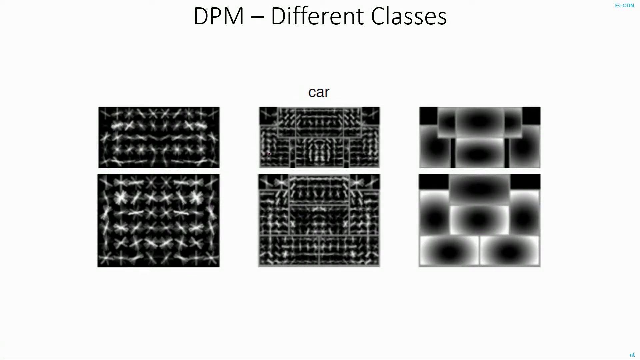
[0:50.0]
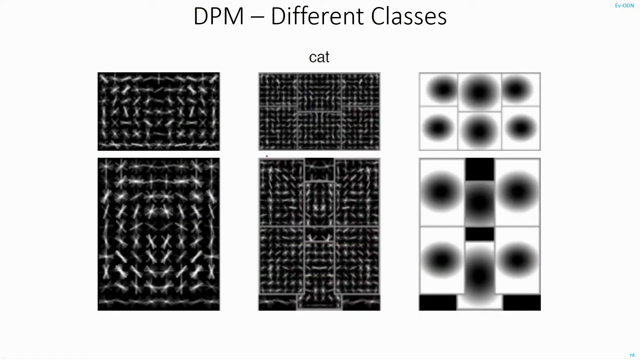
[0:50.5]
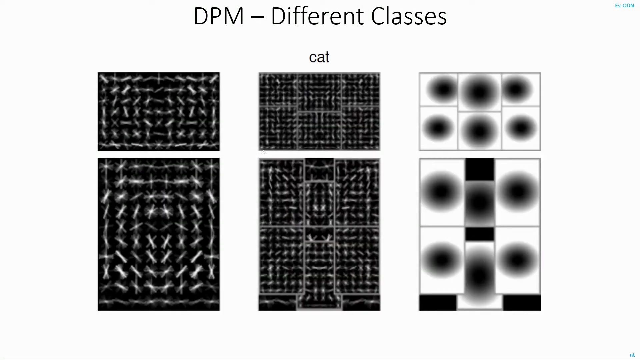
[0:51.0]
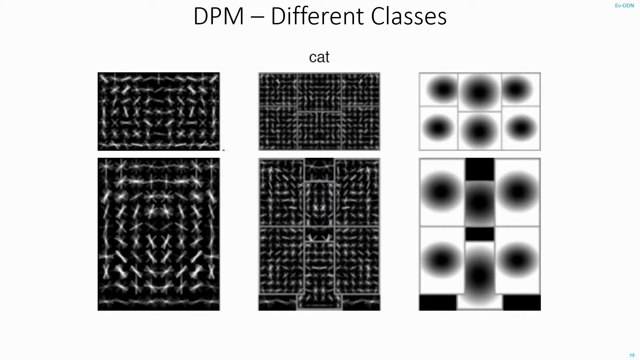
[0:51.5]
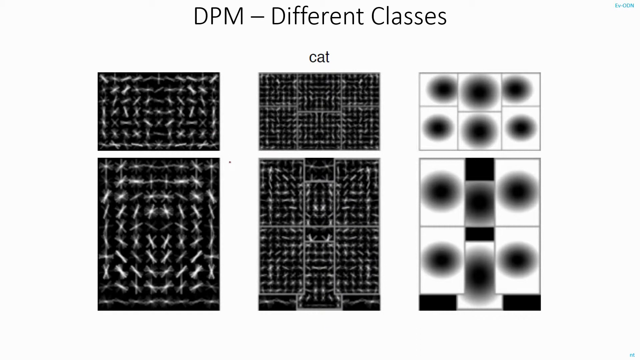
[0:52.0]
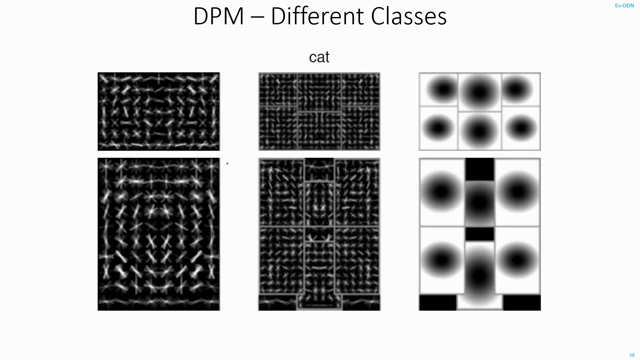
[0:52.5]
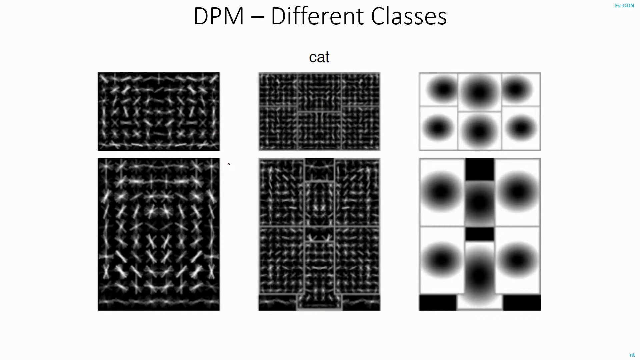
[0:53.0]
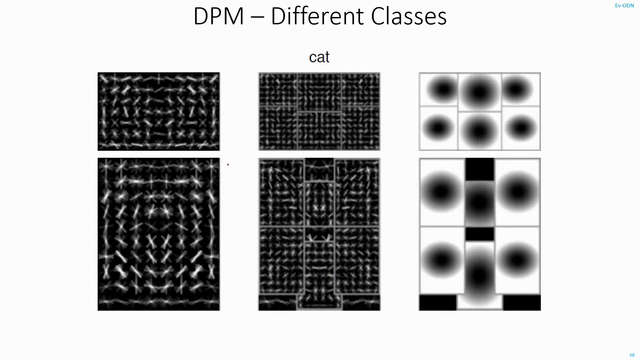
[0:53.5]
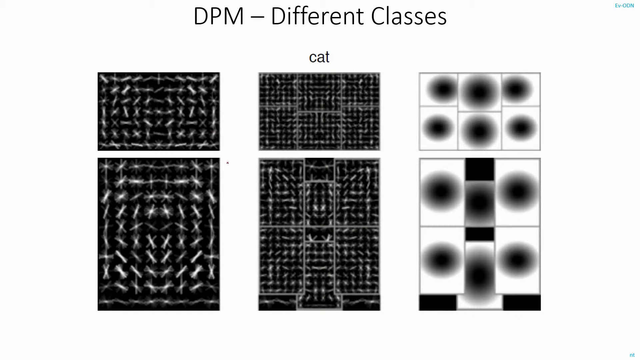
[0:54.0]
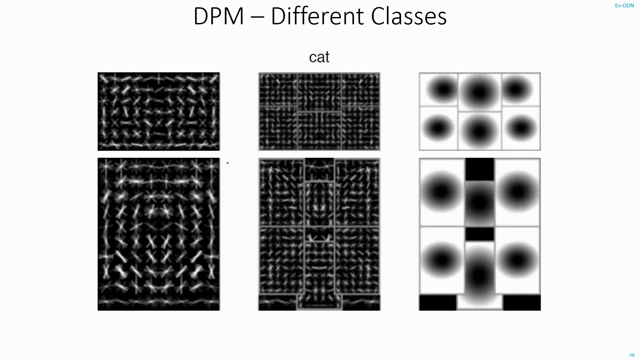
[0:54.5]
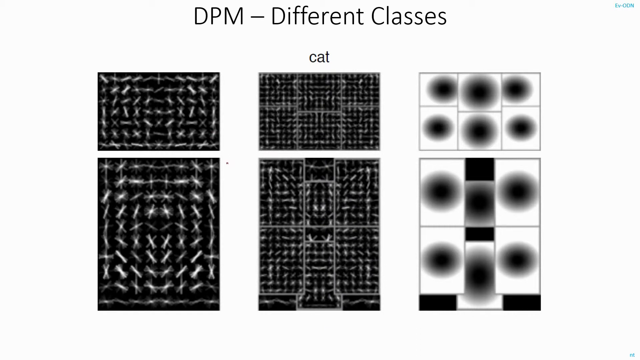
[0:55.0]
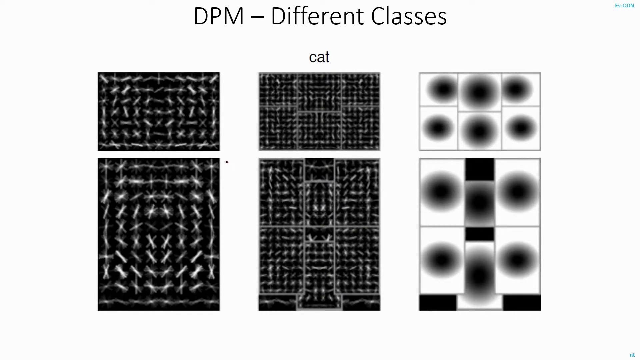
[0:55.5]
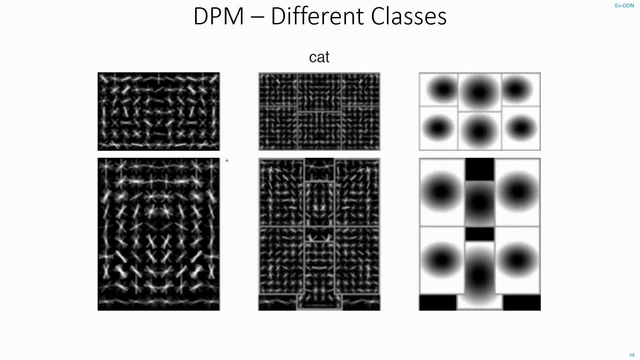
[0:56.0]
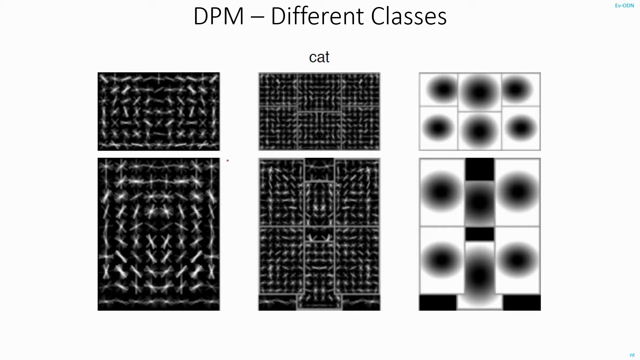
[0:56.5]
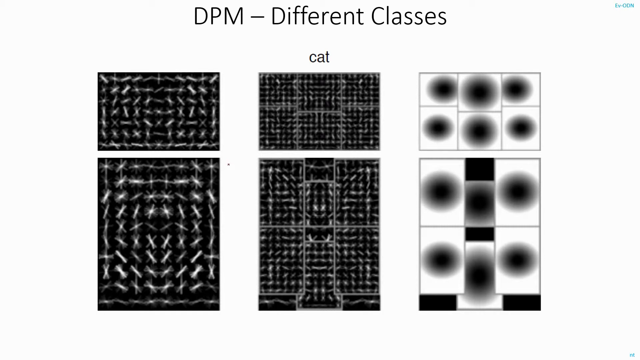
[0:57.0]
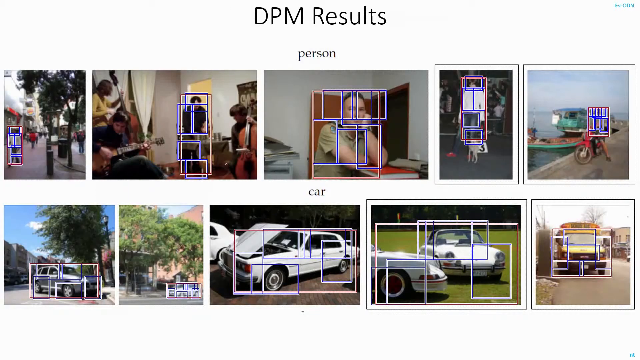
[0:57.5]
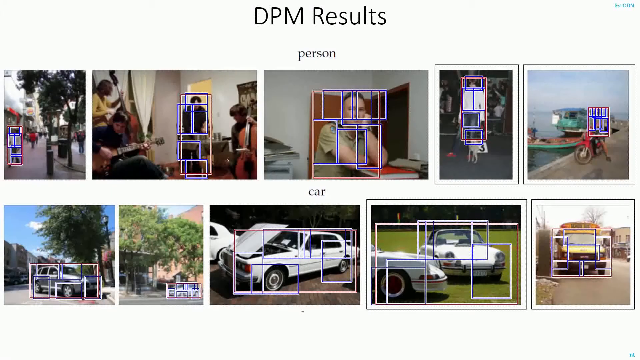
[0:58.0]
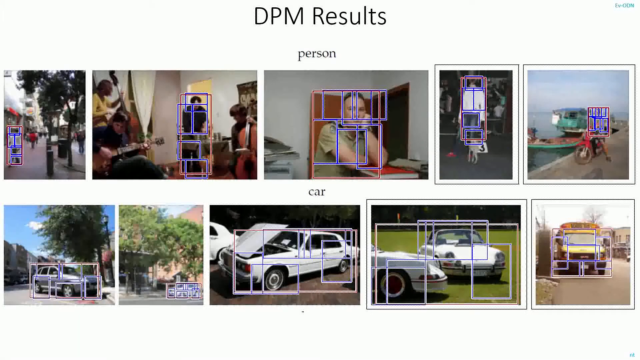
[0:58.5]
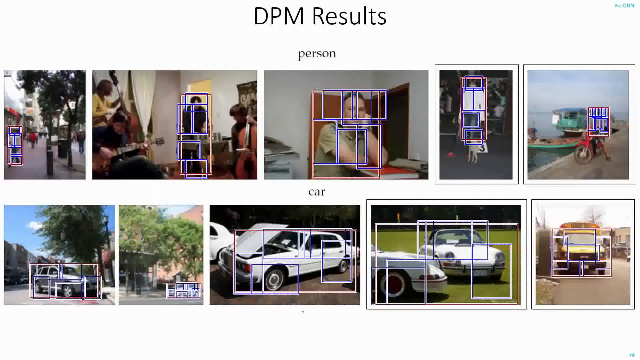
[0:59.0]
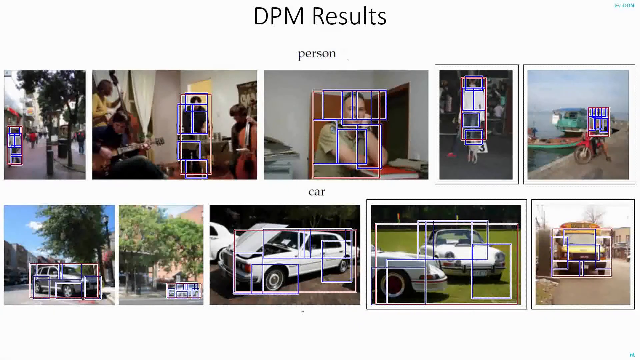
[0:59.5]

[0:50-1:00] Words at the top read "DPM, different classes". There are three rectangles, and below each one are three tall rectangles. Each rectangle contains a pattern, and the same pattern appears in the bigger rectangle under it: the first looks like a lot of lines, the second looks like smaller lines, and the third looks like fuzzy circles. The word "cat" is above the middle one. The slide then switches to one headed "DPM results", showing five pictures in a row with the single word "person" in lowercase letters above them. In each picture at least one main person is covered with many outlines of squares and rectangles. Next comes the word "car", followed by five images of cars in a row from left to right, each car with outlines of squares and rectangles all over it.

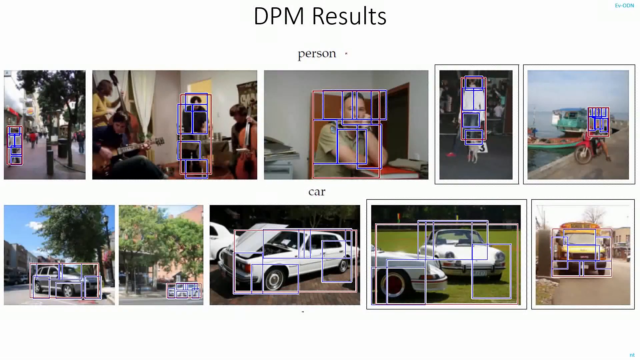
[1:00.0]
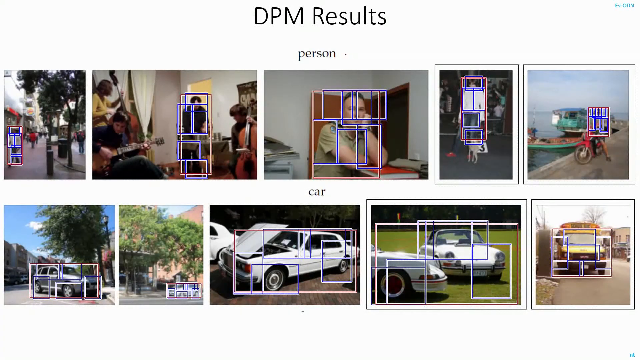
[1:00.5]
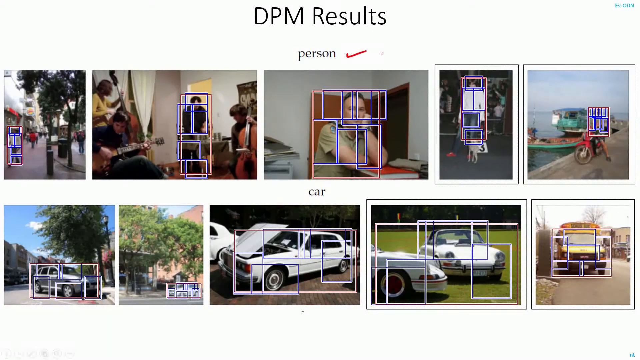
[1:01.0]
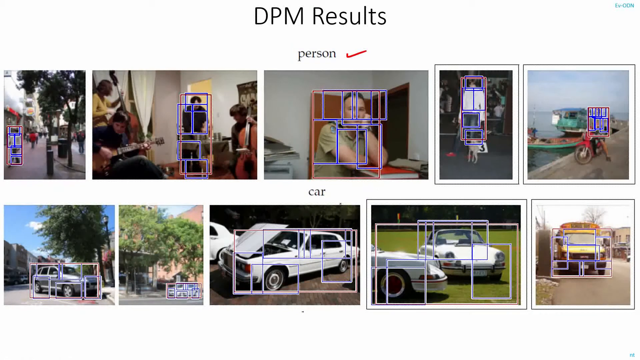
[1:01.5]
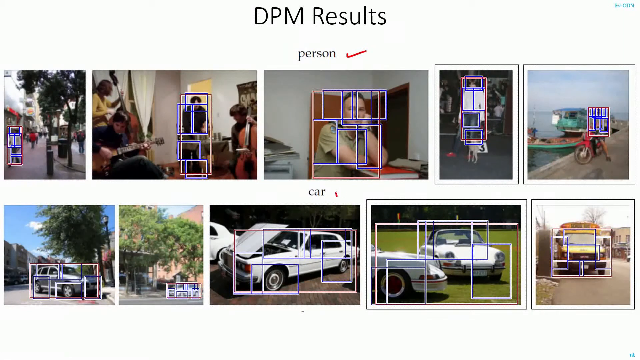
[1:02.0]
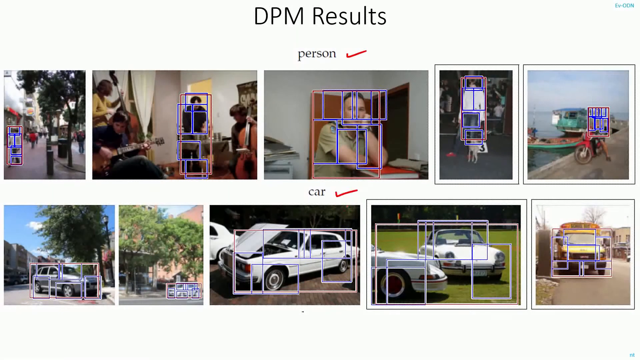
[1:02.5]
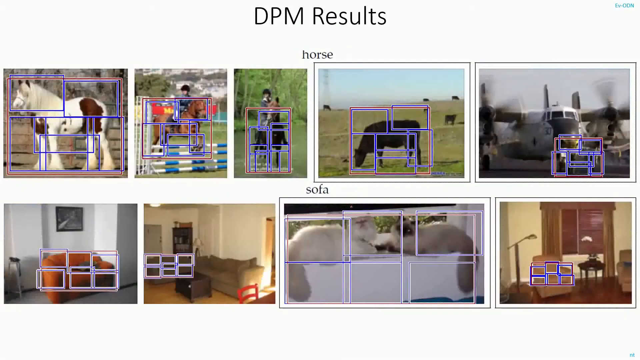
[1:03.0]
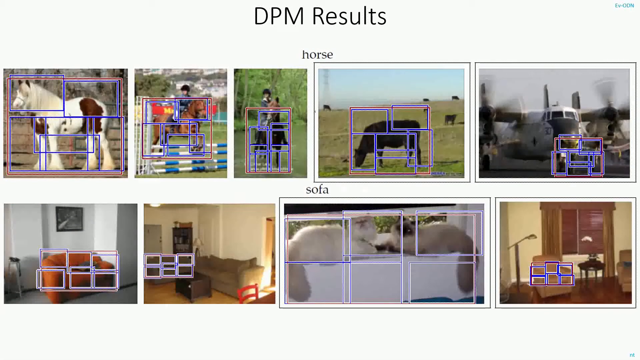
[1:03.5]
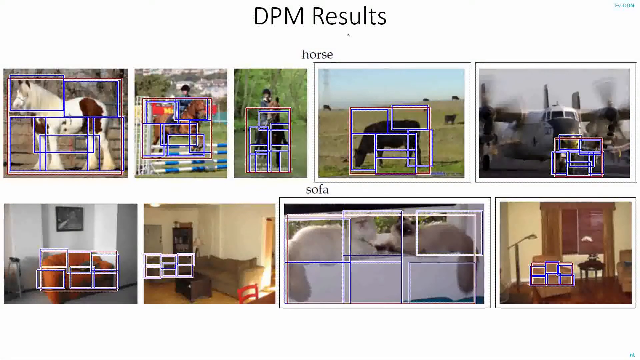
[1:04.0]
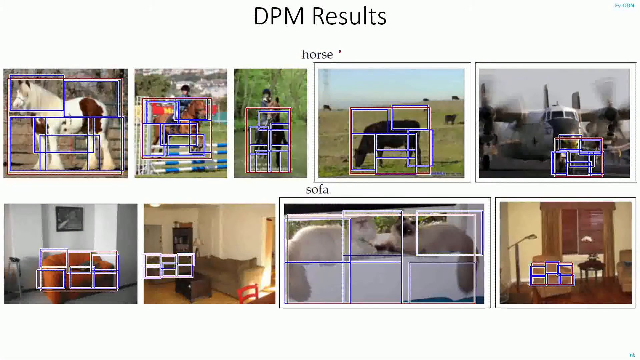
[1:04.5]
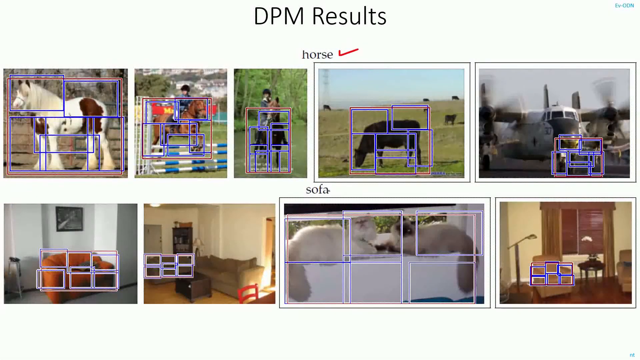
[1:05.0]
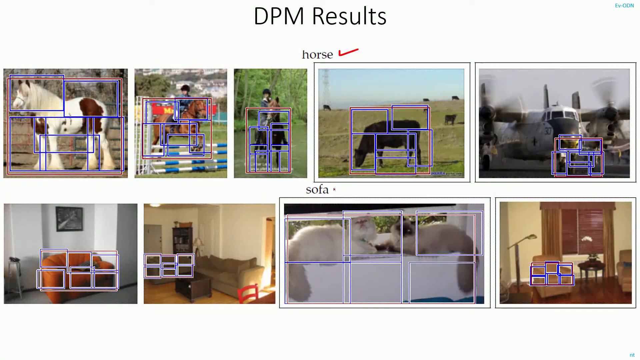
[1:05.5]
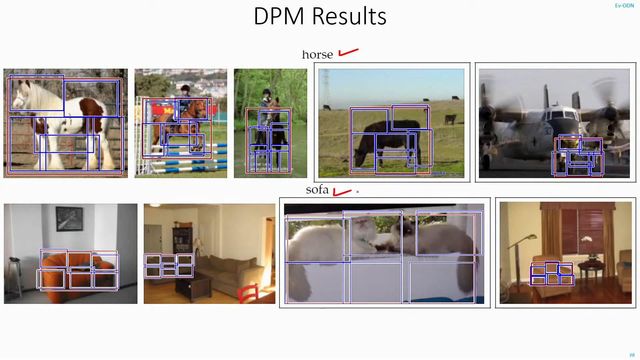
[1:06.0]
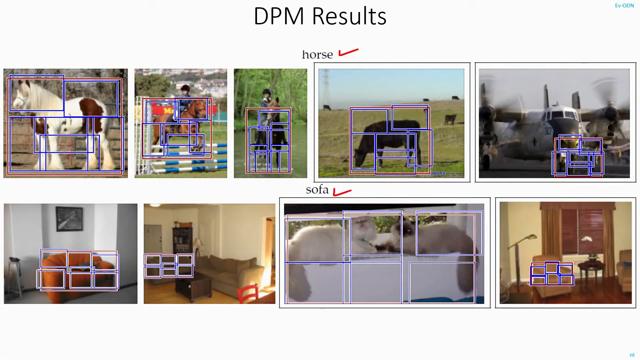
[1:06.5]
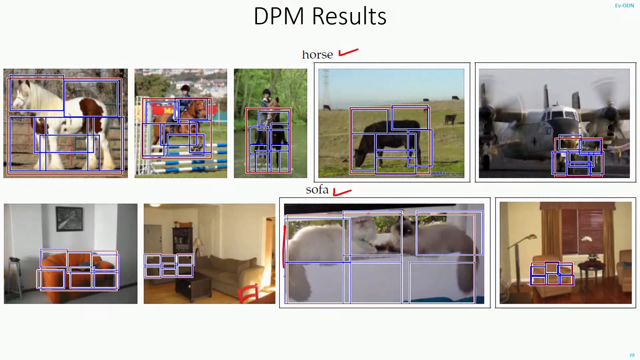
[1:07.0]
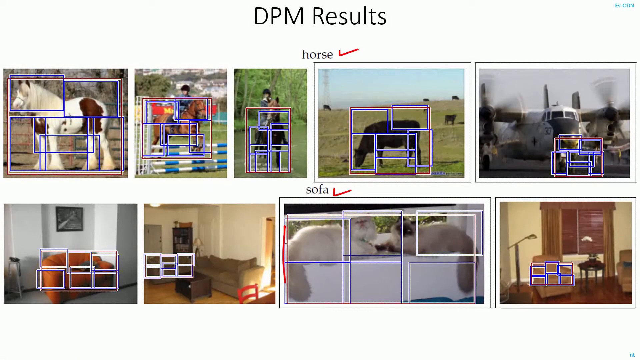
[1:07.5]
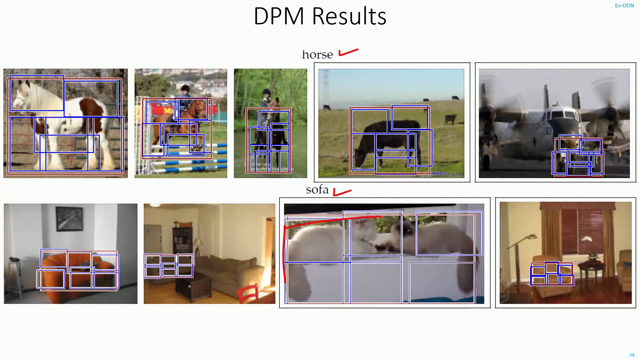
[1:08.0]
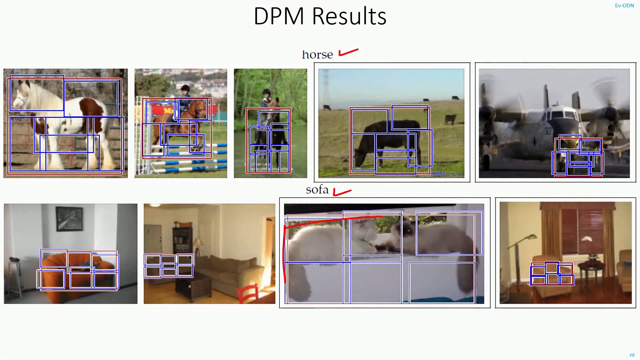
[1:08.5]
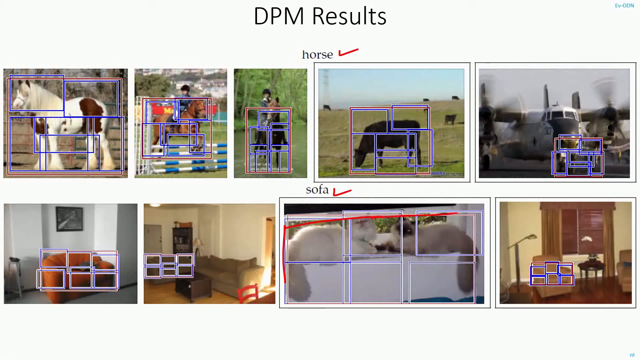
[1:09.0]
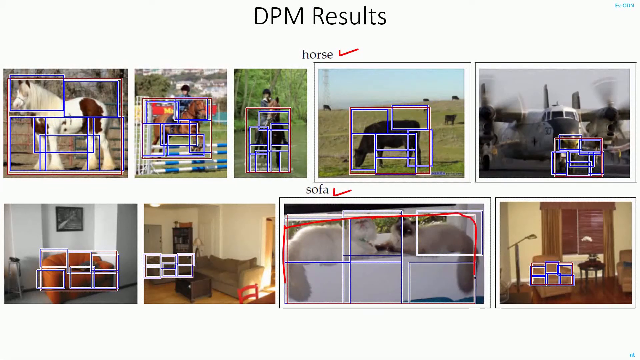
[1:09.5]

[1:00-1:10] On a white background, the words "DPM results" are at the top, followed by the word "person" and a row of five images underneath. The images differ in shape, including tall rectangles, wide rectangles and a square, but are all the same height. Some contain more than one person, but in each image one person has many blue and red outlines of squares and rectangles, as if marking different areas of the person. Next is the word "car" with a row of five images beneath it, all the same height but different widths, and in each one the car has blue and red squares and rectangles all over it. Red check marks suddenly appear next to the word "person" and next to the word "car". The slide then changes to one with the same header, showing the word "horse" with five images of horses marked with outlines in the same way, and the word "sofa" with four images of sofas across, each sofa with squares on it. Red check marks then appear next to "horse" and next to "sofa".